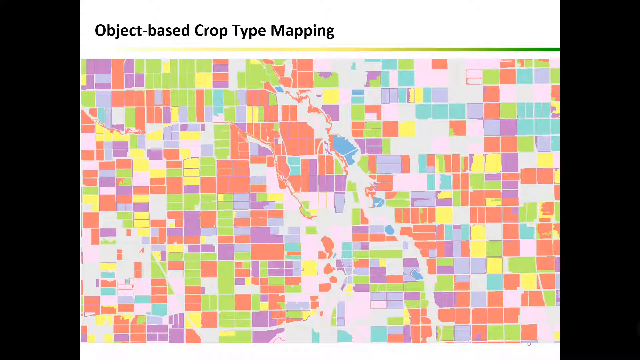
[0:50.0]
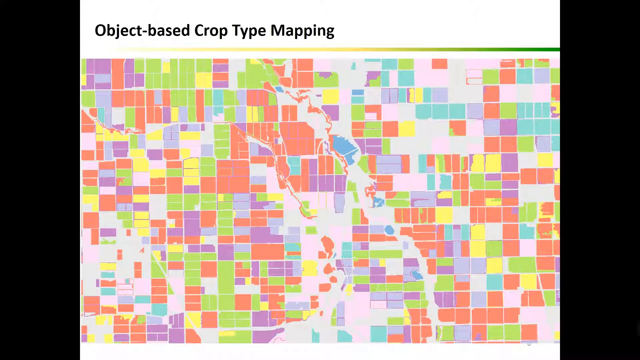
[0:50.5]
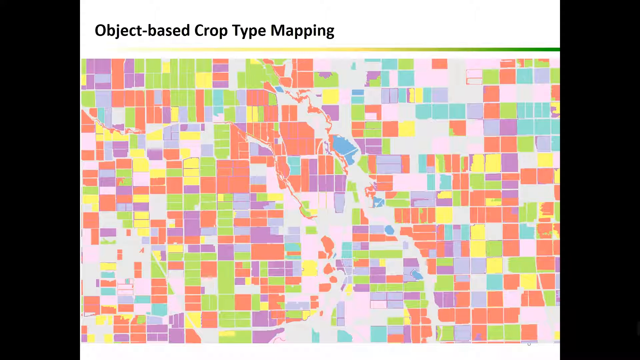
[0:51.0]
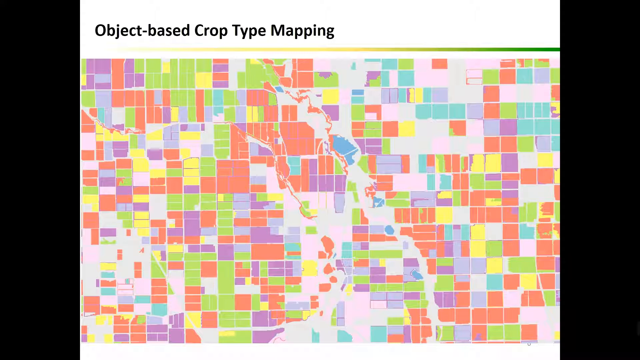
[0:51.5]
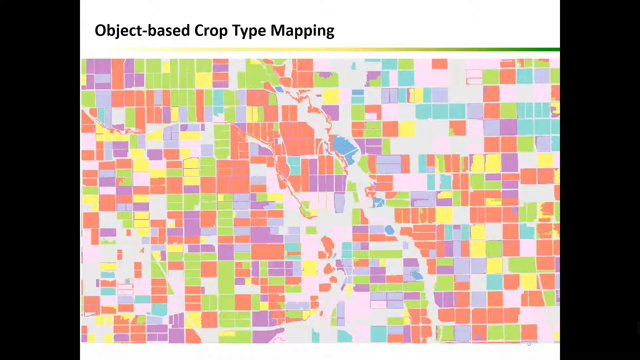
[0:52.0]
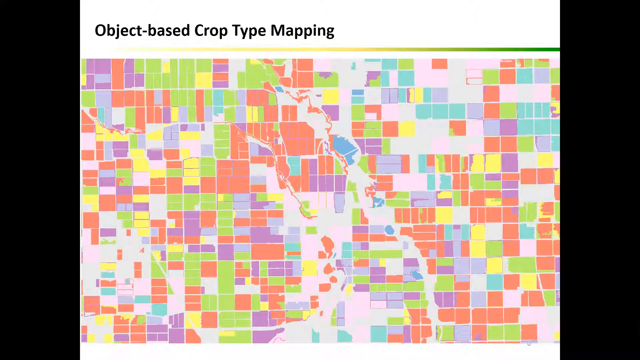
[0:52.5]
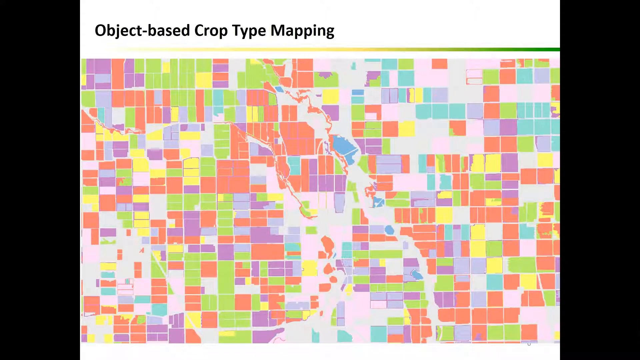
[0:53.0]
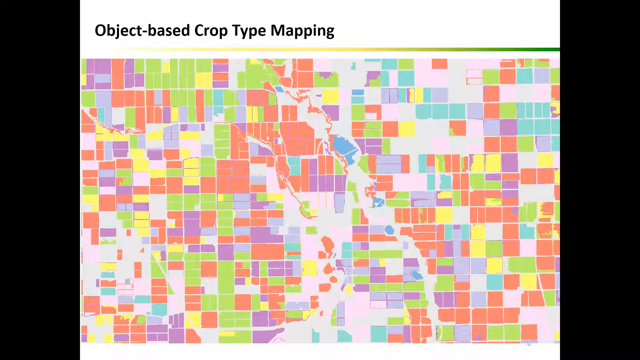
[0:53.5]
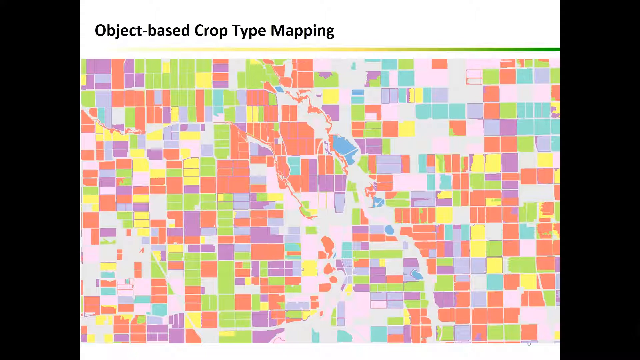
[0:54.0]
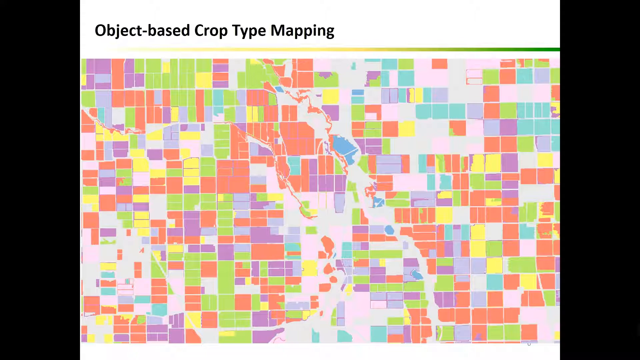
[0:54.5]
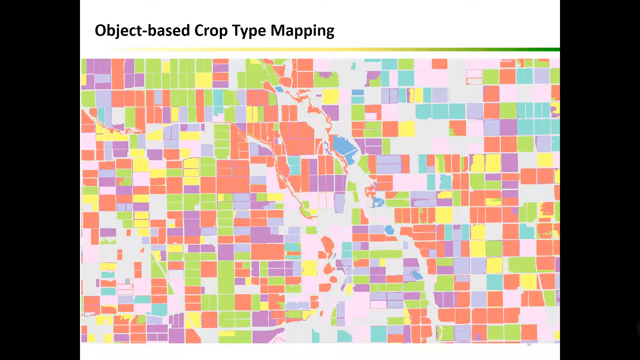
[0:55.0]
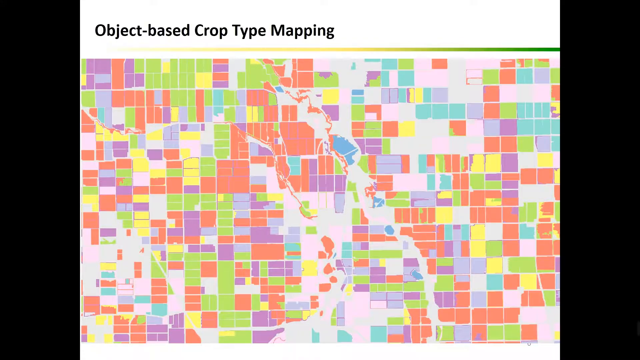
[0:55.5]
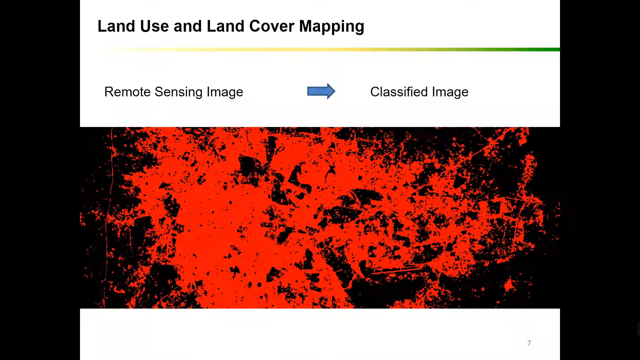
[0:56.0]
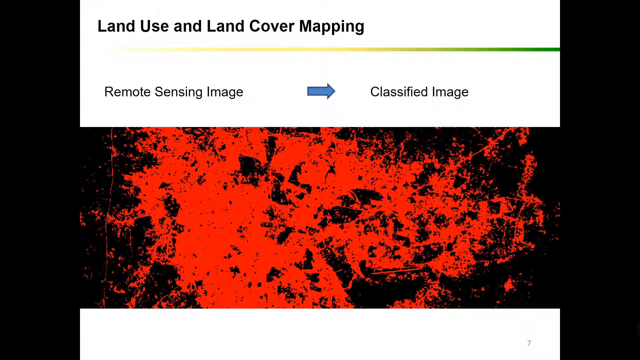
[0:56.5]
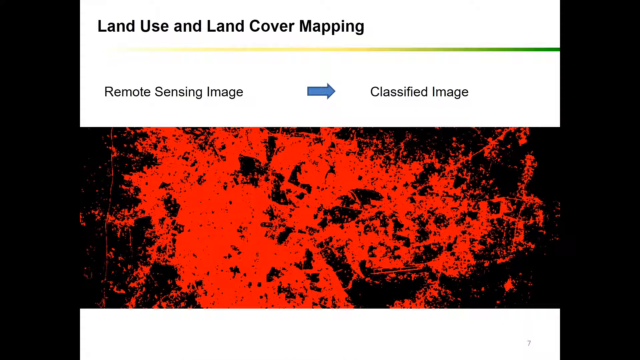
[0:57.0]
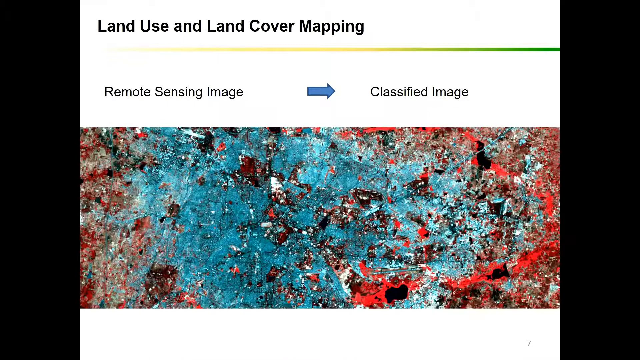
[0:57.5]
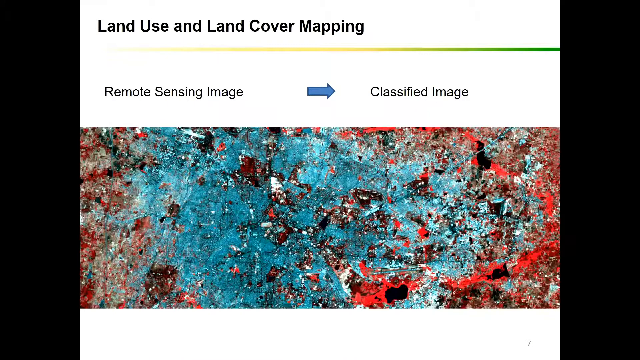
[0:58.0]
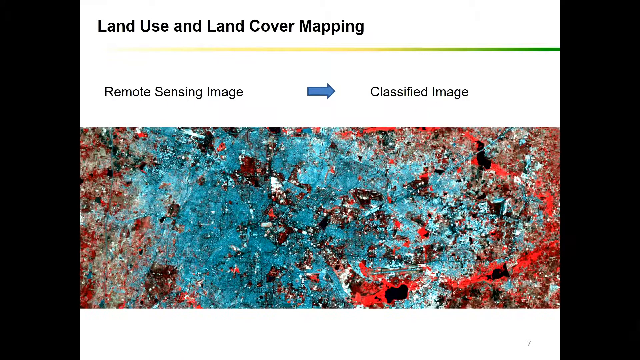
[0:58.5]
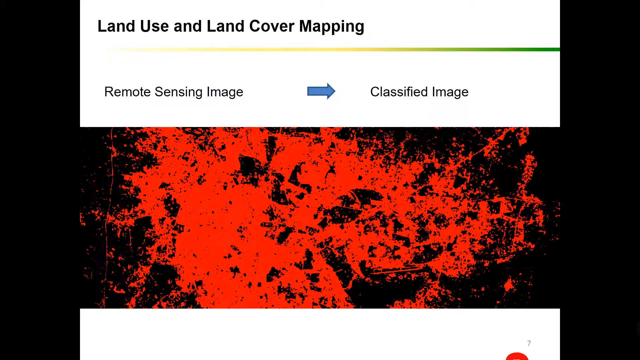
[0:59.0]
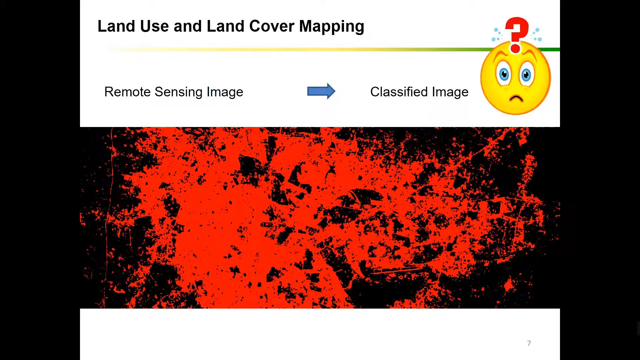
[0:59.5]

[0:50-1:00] The video begins with the object-based crop type mapping and then moves to a black background with bright red imagery on it; it is unclear whether the red is attached to the land radiating out, and it looks like red paint thrown on a black background. The heading says "land use and land cover mapping," and below it says "remote sensing image" with an arrow to the right pointing to "classified image." A cartoon face appears that is not smiling: its eyebrows are raised, its mouth is in a frown, a very large red question mark is above its head, and sweat pops out on its forehead, as if very surprised.